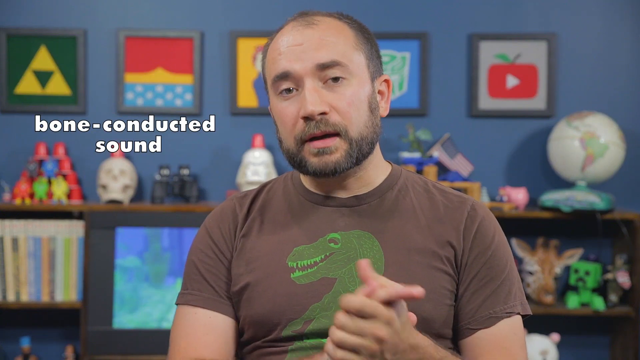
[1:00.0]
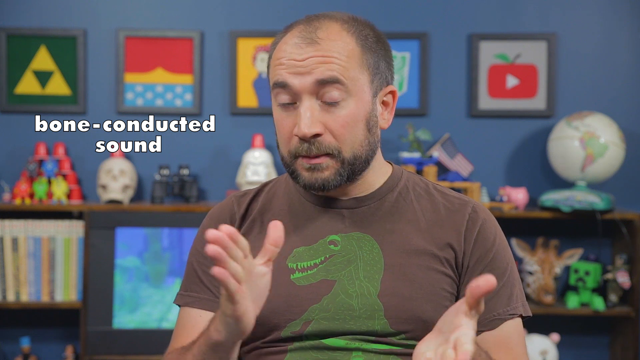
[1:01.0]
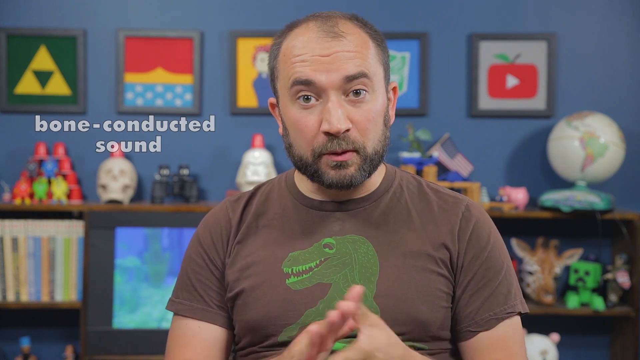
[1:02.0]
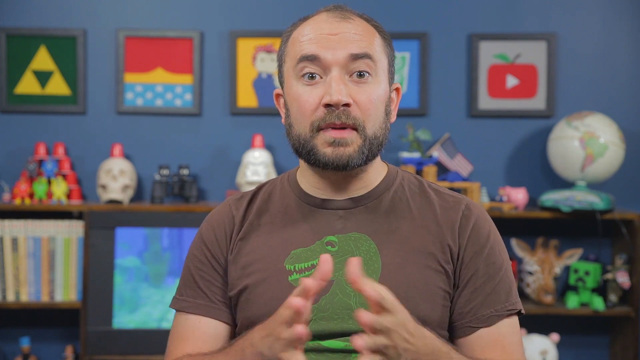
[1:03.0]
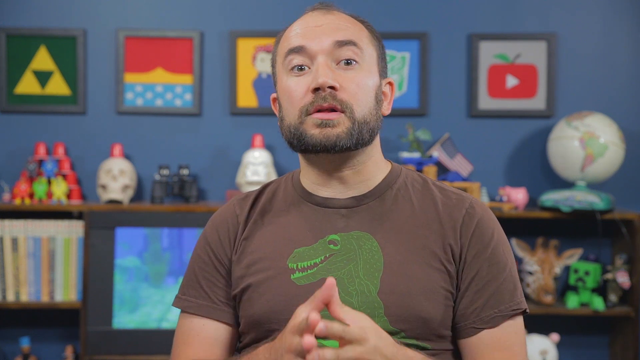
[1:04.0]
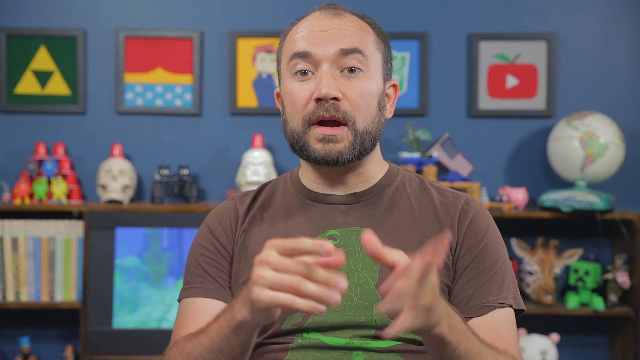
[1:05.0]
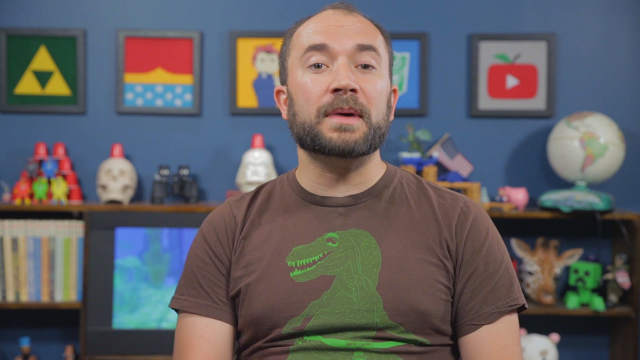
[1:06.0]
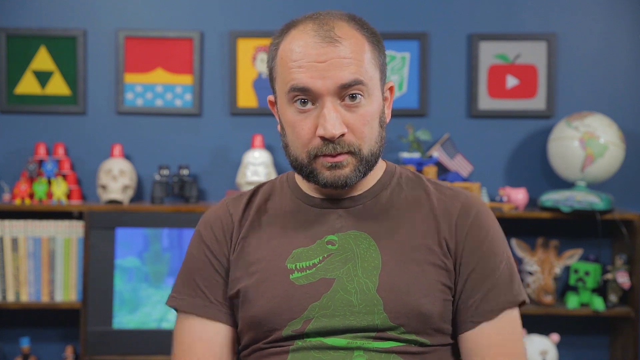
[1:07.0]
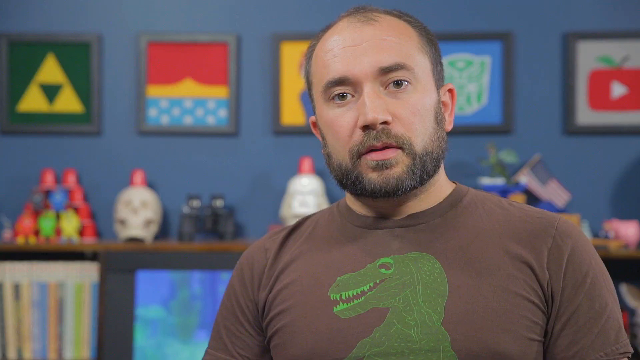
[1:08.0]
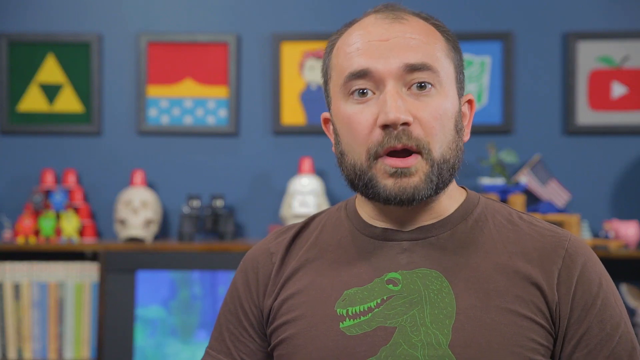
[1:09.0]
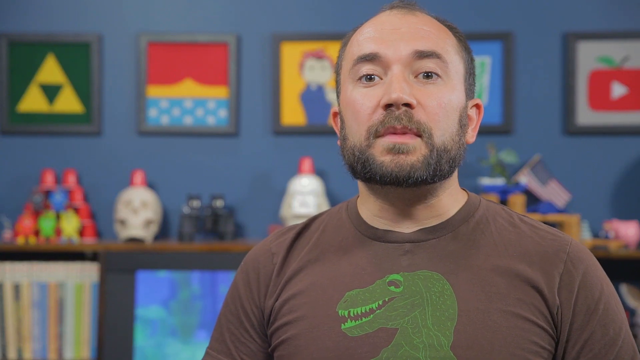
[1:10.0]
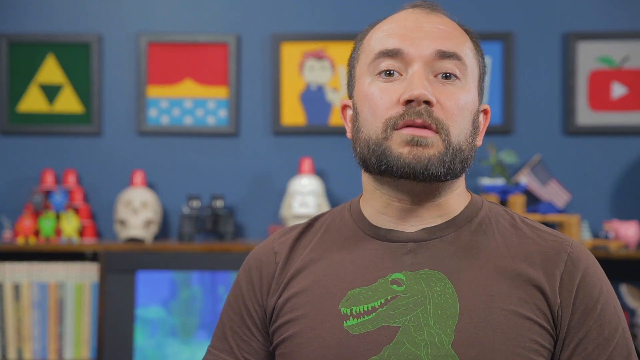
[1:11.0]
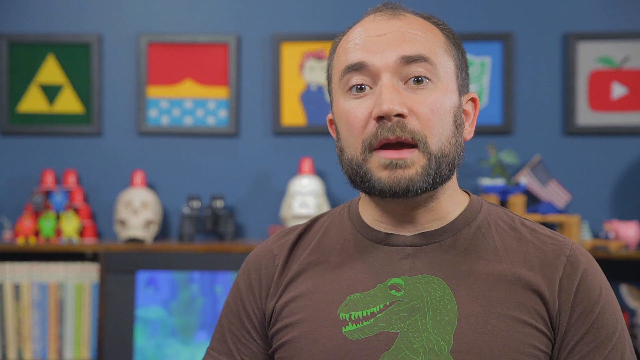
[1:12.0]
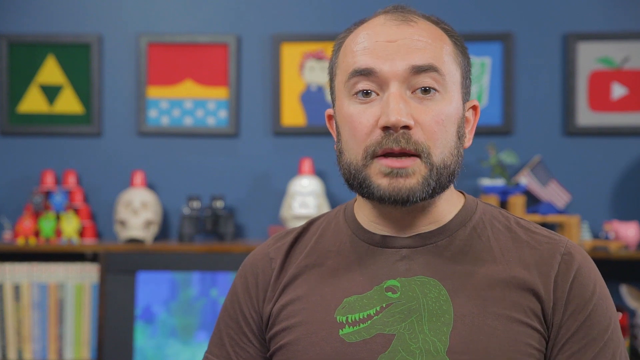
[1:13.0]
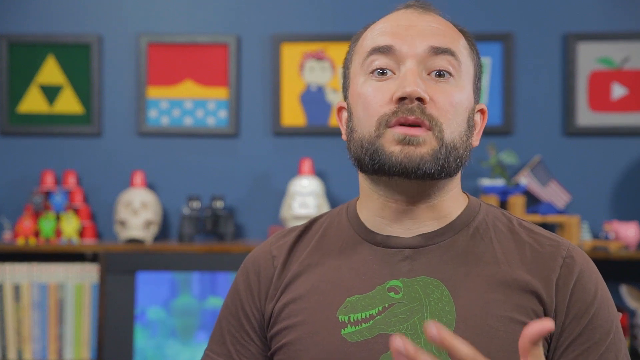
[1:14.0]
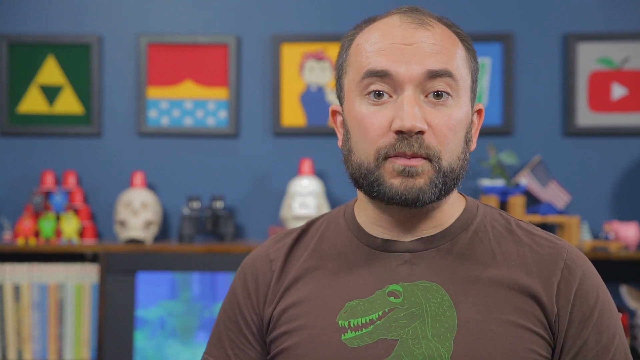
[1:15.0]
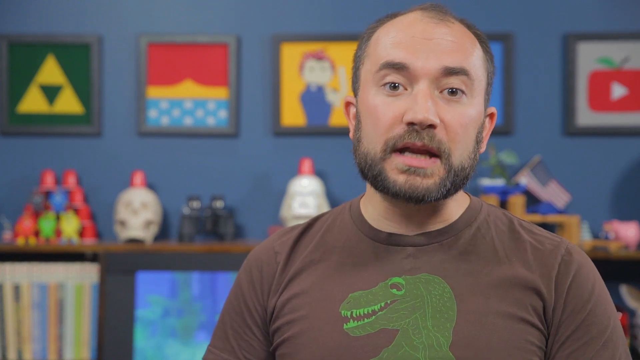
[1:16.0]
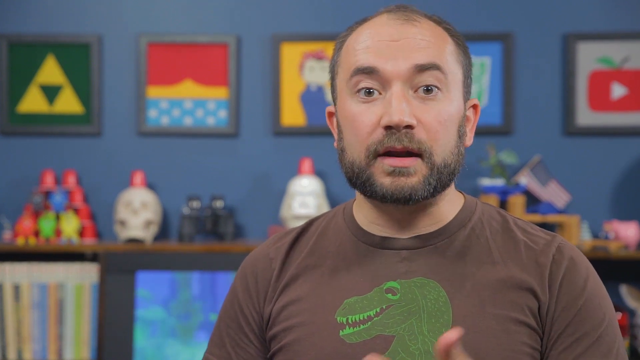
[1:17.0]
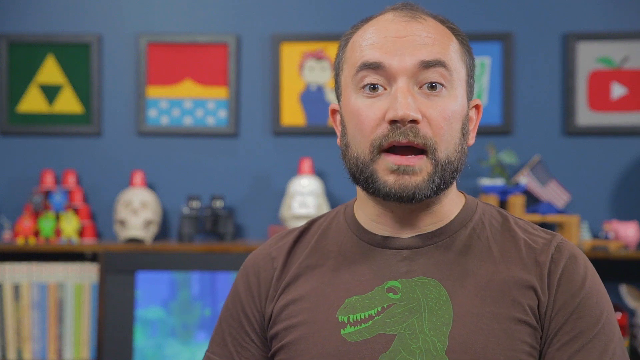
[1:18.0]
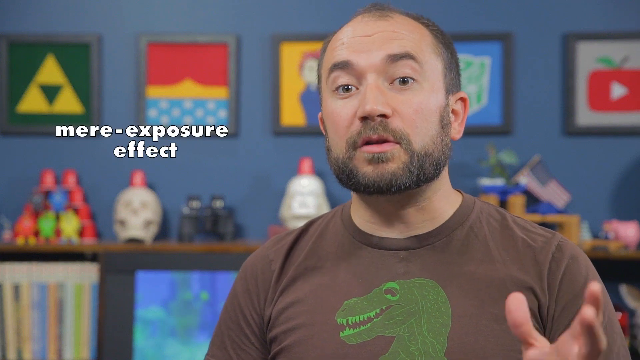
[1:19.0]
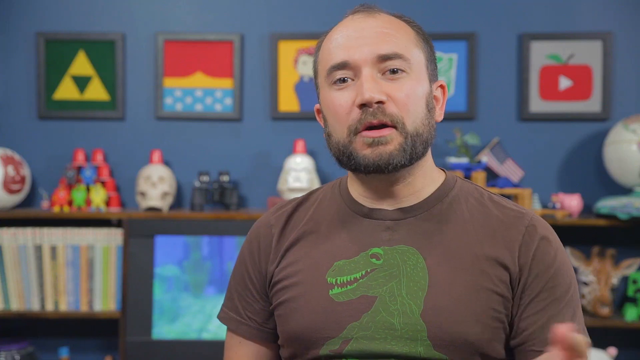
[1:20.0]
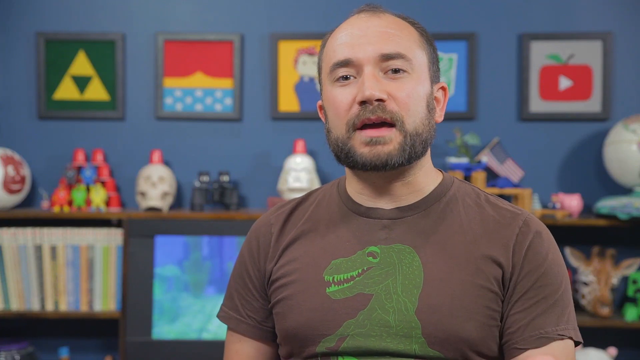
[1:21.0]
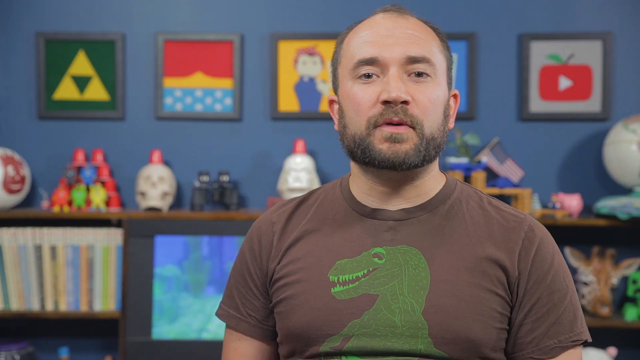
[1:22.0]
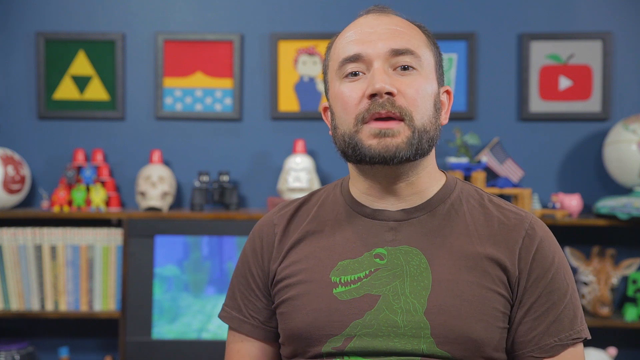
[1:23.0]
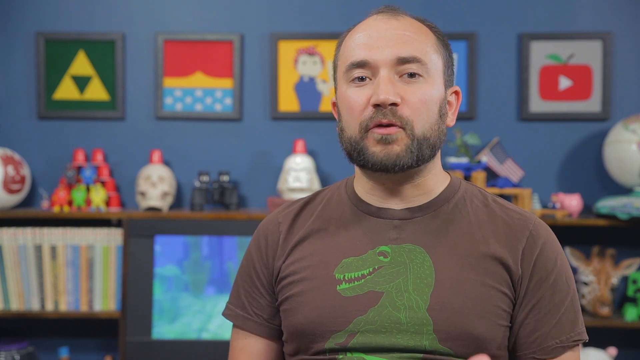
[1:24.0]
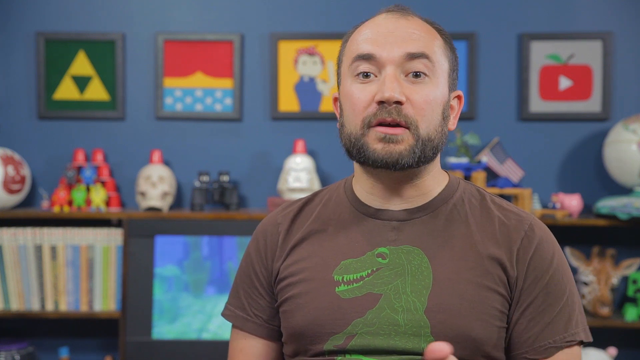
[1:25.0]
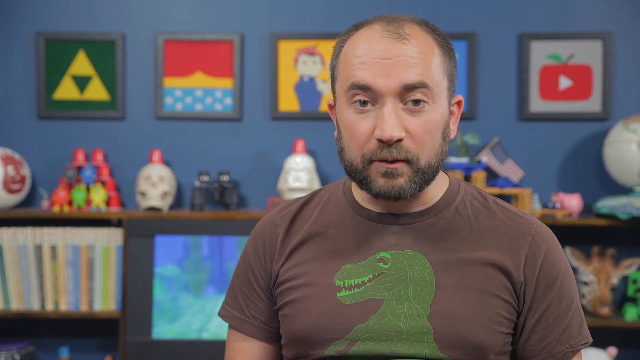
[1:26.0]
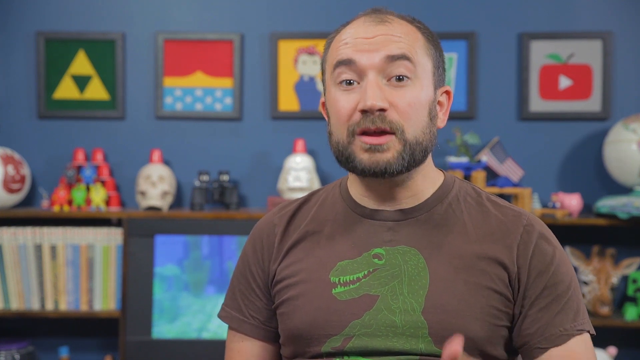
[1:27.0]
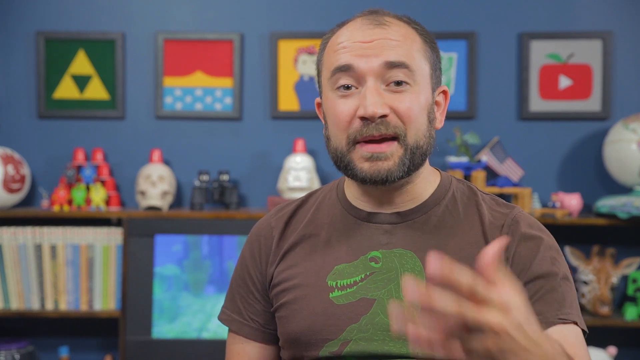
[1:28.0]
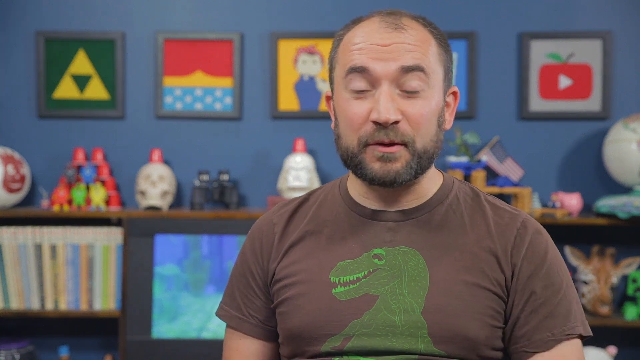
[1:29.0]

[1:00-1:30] A man sits in a room, looking towards the camera, wearing a brown t-shirt with a green dinosaur on it. Behind him are a number of slightly out-of-focus objects, including what appear to be five different paintings, a globe, an American flag, a Minecraft creature, some cups, binoculars, and other miscellaneous objects. To his left, in white text, are the words "bone-conducted sound." The man talks towards the camera as the words disappear, using his hands for emphasis the entire time he speaks. The video cuts to a close-up of the man as he continues talking towards the camera. More white text appears to his left reading "mere-exposure effect." That text also disappears, and the man keeps talking towards the camera.